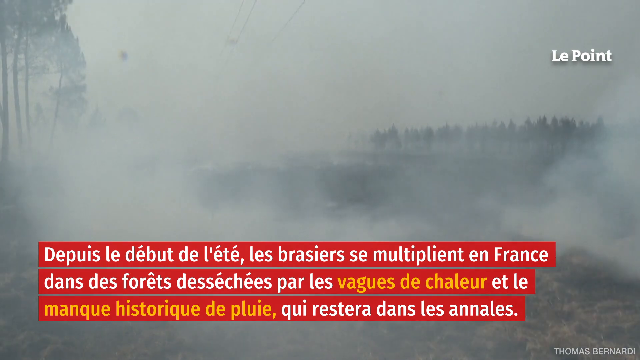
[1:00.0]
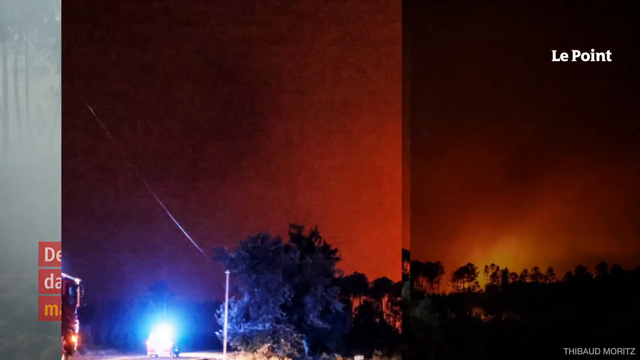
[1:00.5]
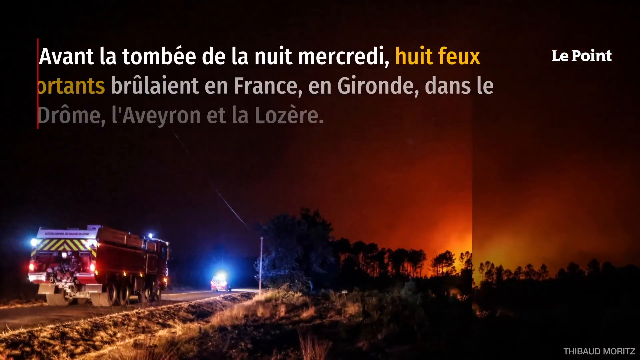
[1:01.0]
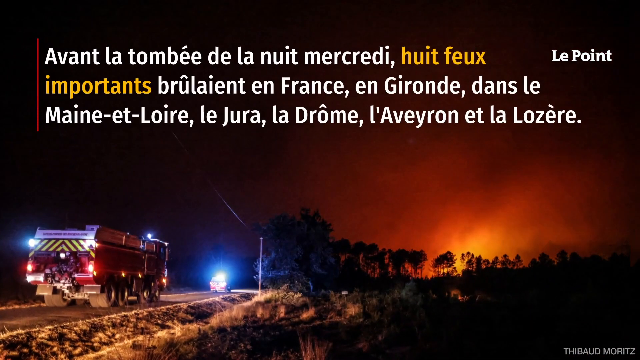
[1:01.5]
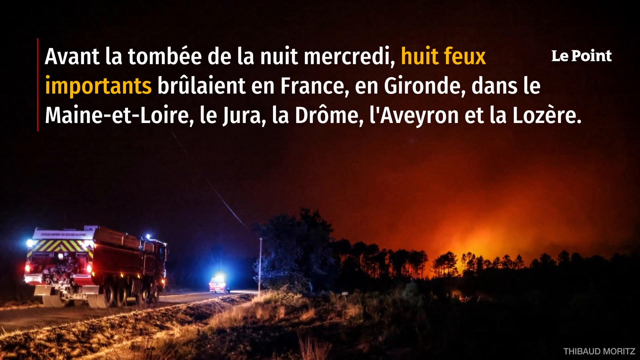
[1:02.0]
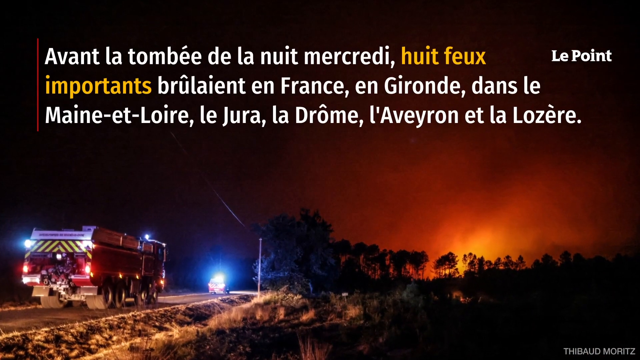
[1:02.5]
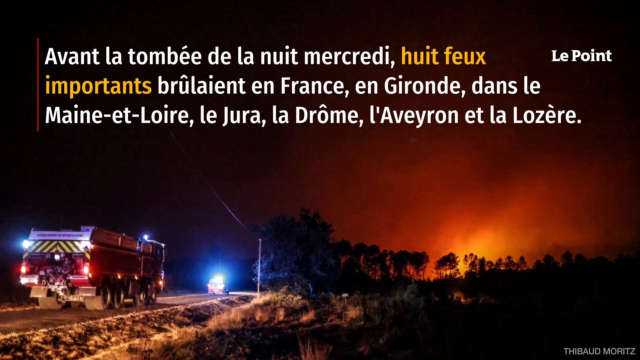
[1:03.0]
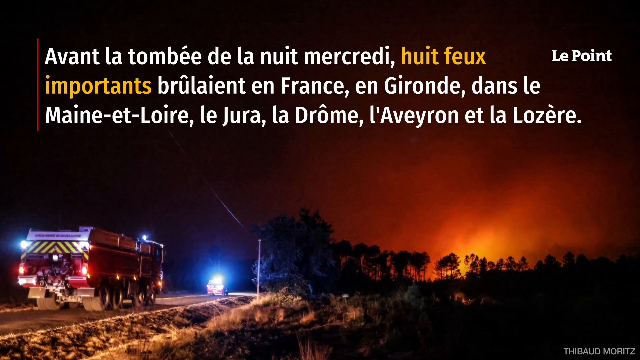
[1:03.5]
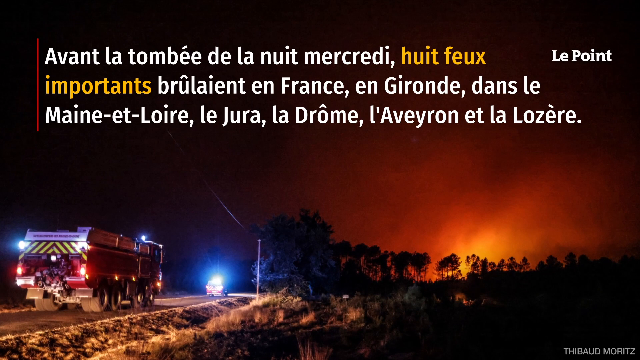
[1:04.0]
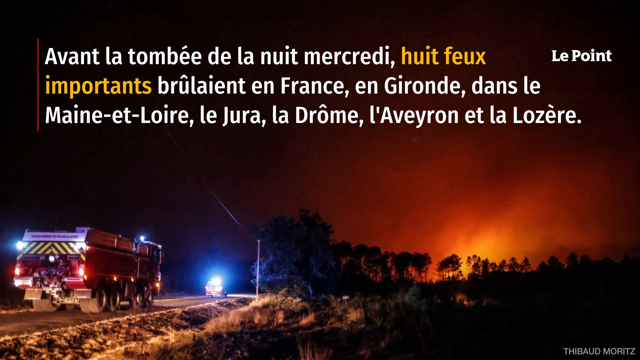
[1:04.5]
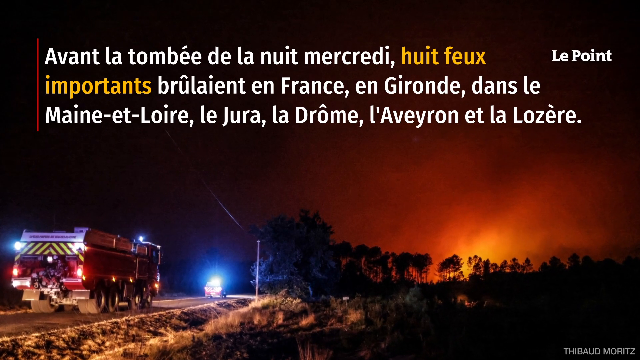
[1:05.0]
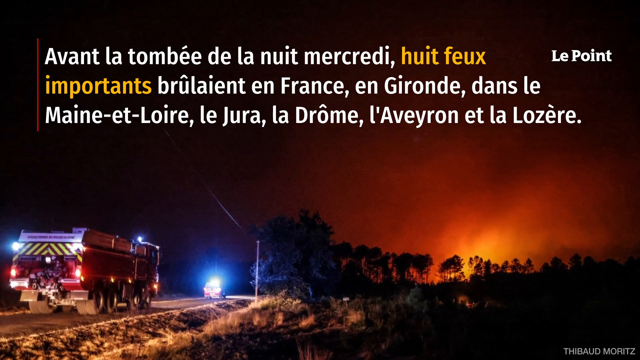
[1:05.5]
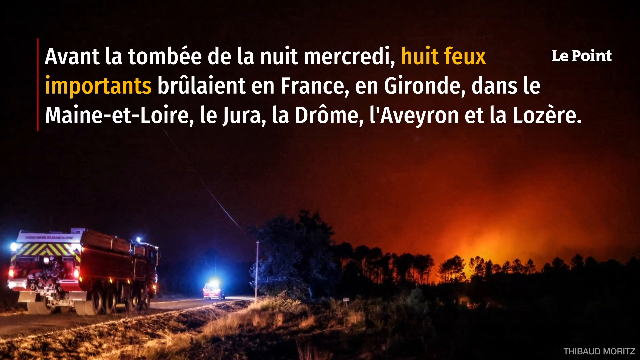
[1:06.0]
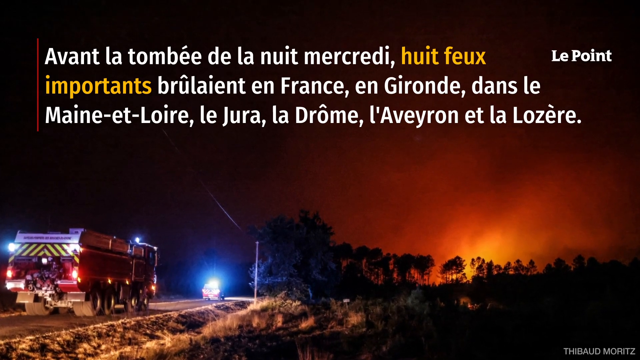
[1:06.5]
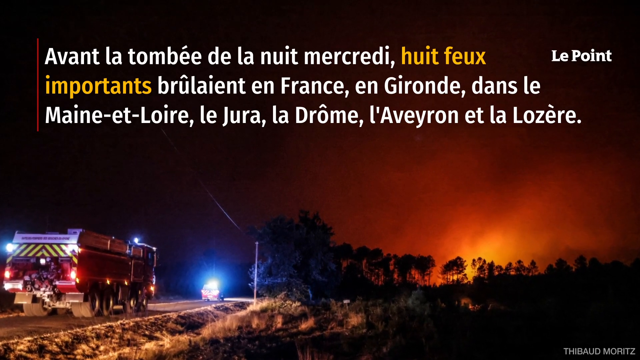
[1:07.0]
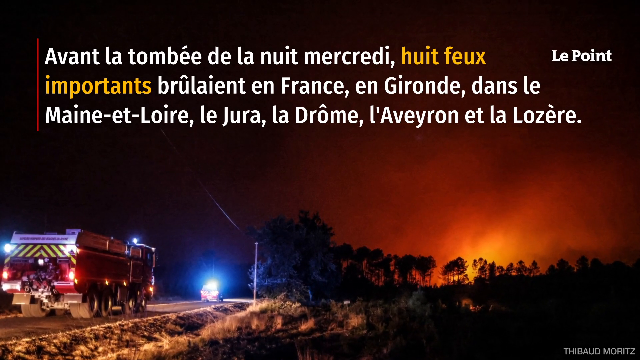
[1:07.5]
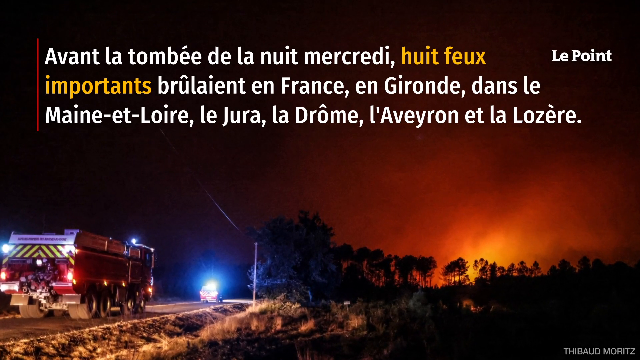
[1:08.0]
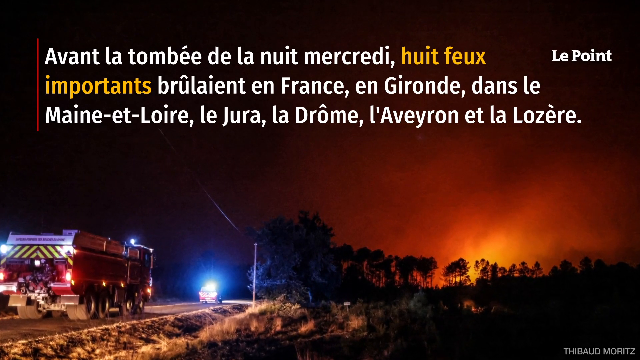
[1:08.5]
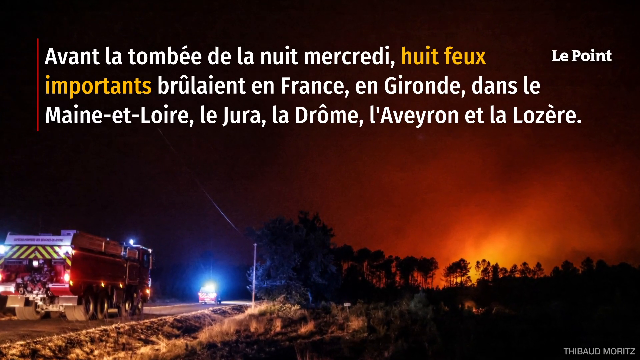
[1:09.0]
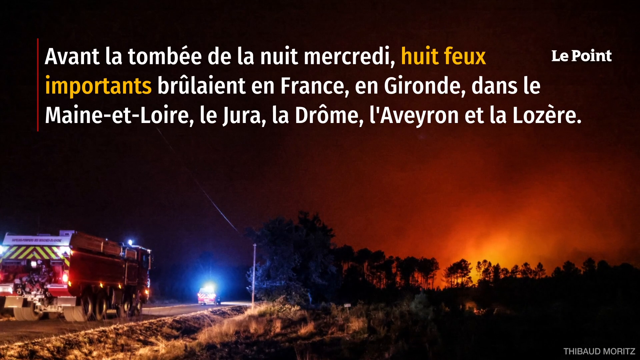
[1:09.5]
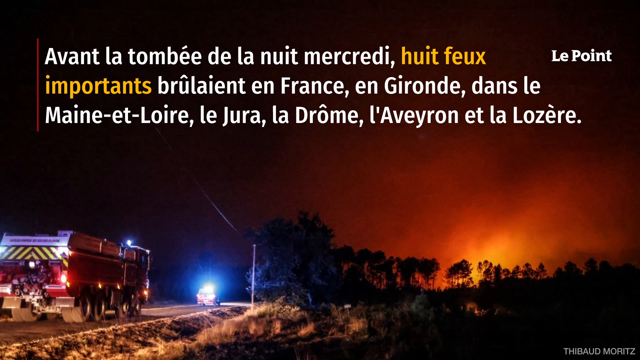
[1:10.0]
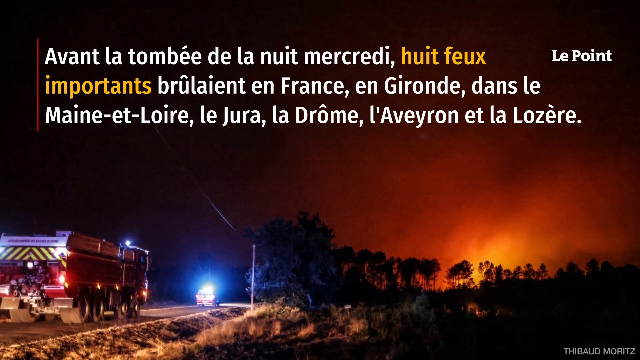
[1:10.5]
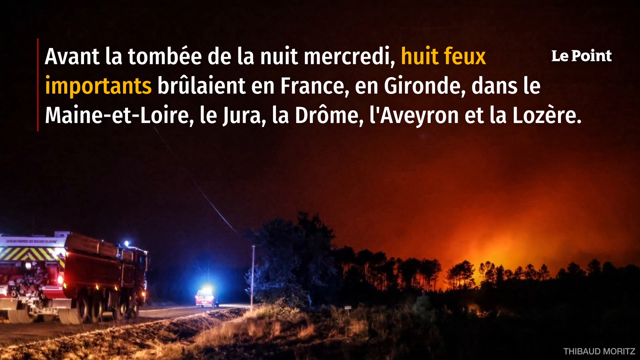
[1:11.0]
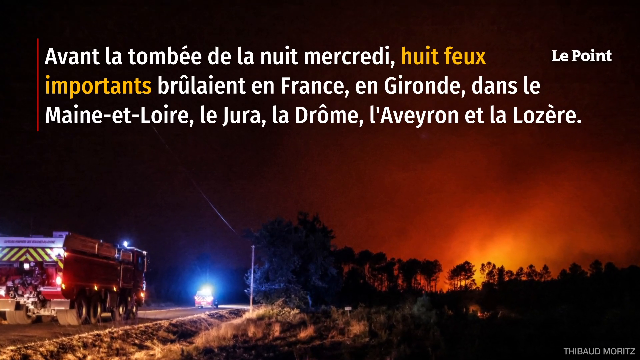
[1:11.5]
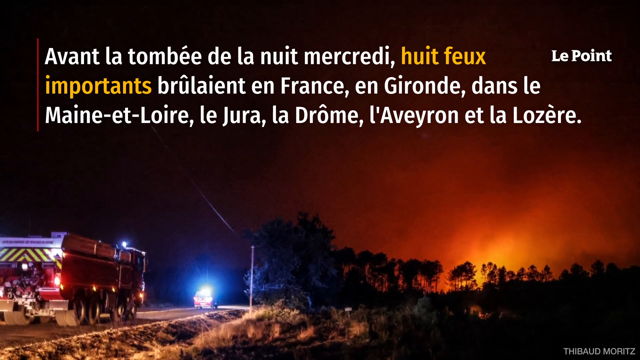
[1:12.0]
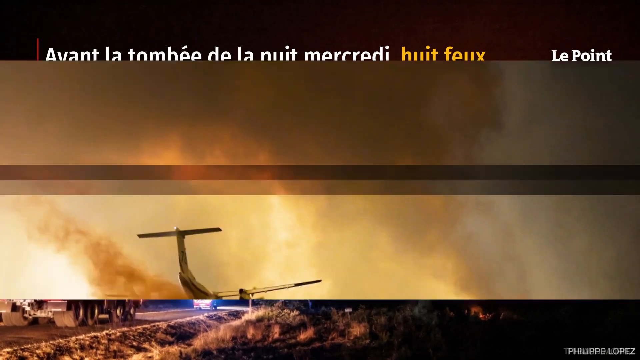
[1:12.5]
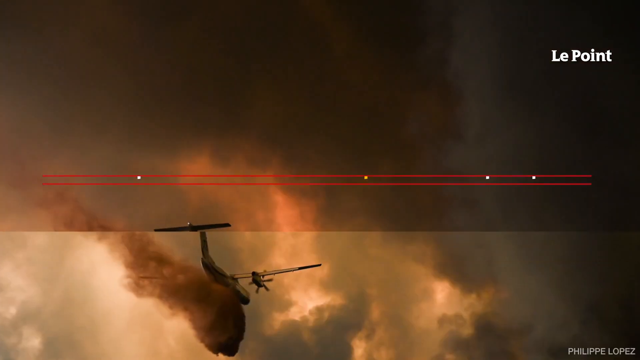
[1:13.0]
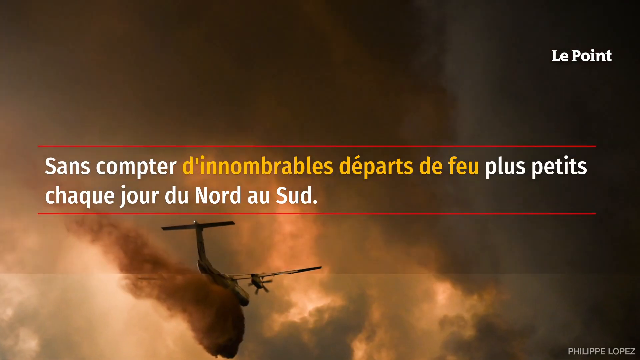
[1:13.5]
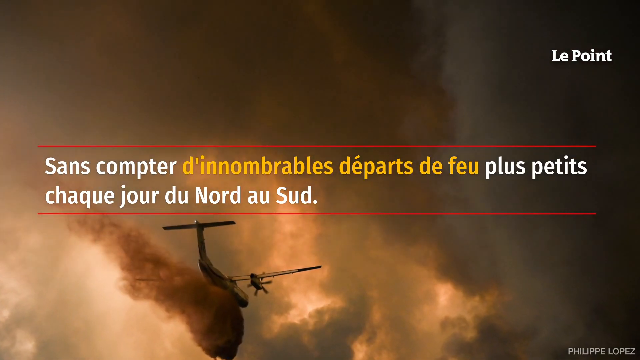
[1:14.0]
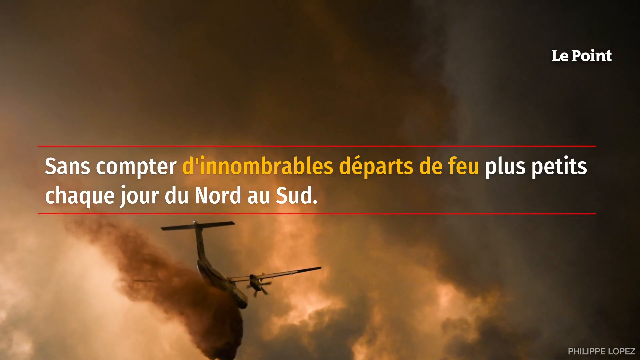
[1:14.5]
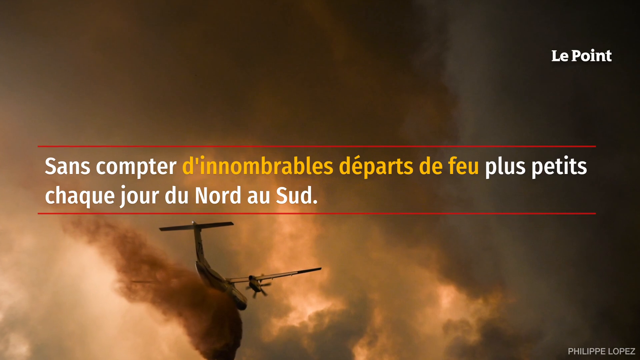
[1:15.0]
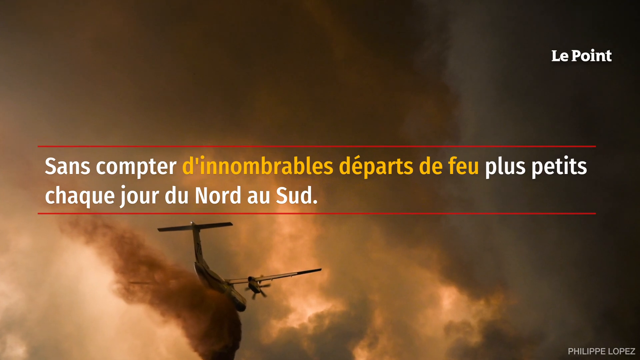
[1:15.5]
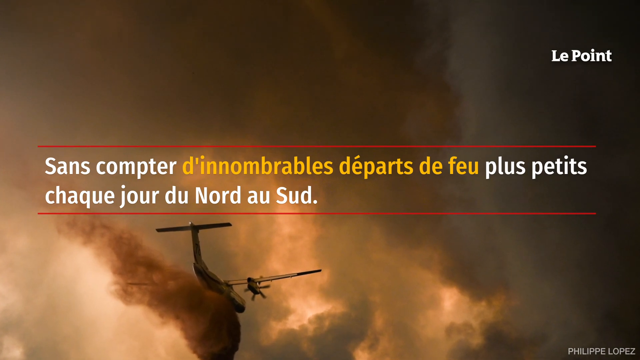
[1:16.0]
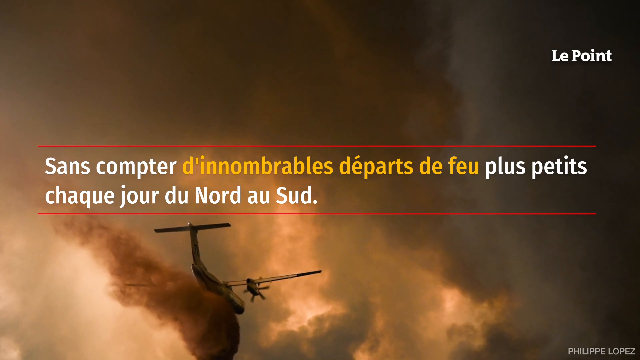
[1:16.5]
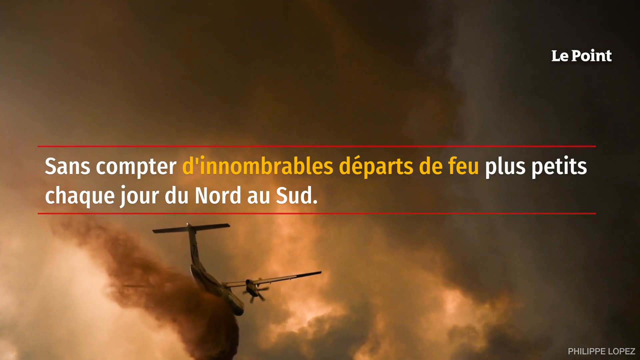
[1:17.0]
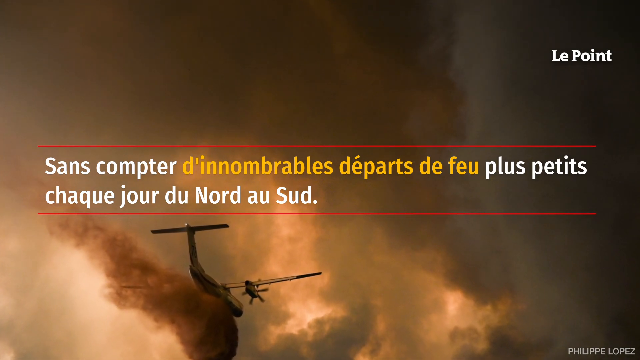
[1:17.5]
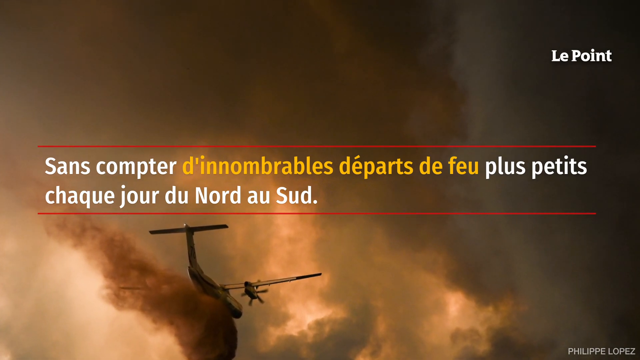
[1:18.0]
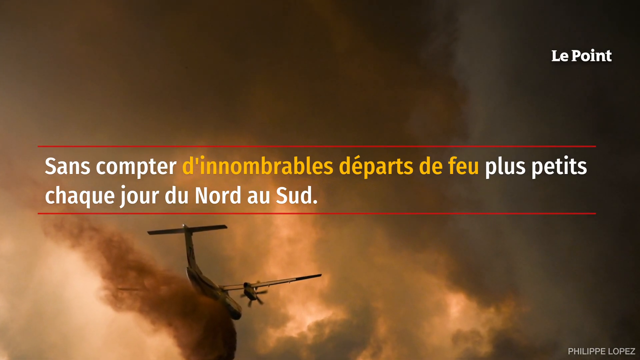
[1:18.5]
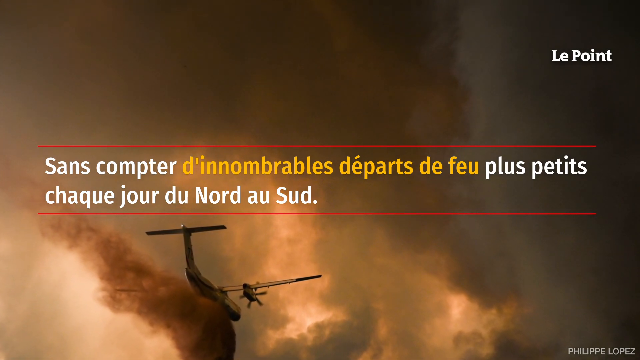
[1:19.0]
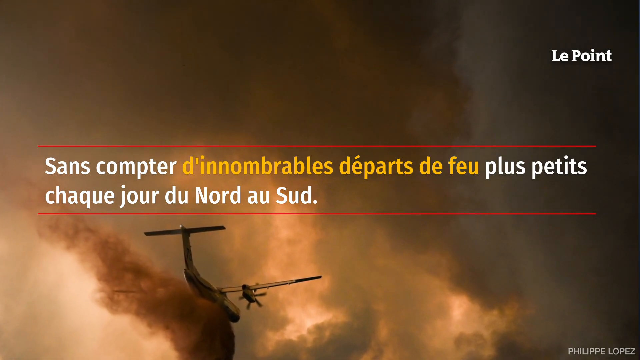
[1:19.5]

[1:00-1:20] The Le Point news coverage continues with a photo taken at night of an outdoor forest area, showing a fire truck being escorted by a police officer headed toward the area of the fire. The glow of the fire can be seen in the background, and it appears to be very large and out of control. The video then cuts to a photo of a helicopter flying through the sky over the fire, surrounded by a lot of smoke and soot, in what appears to be a very dramatic situation. Across these photos there is white French text with a few yellow highlighted words. The video then cuts back to the government man, assumed to be Emmanuel Macron, giving his statement to the reporters in the park area.